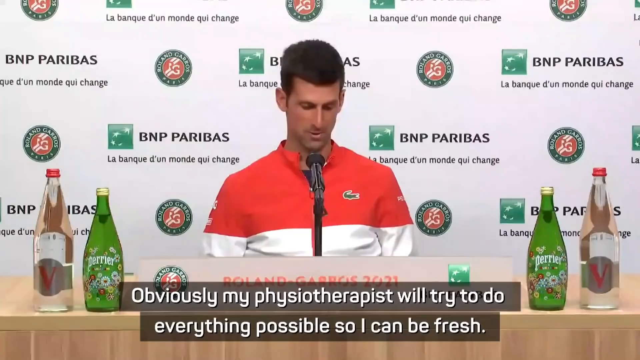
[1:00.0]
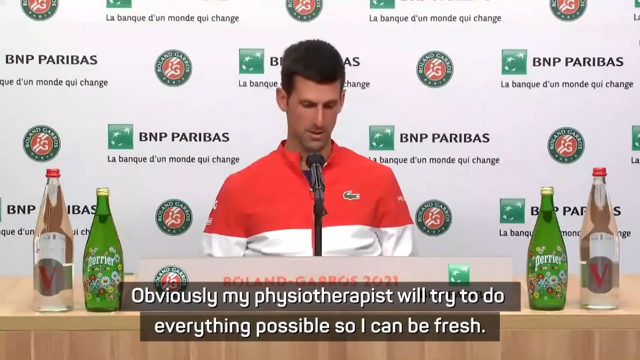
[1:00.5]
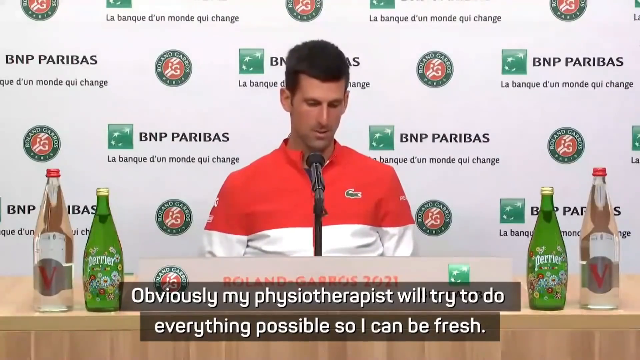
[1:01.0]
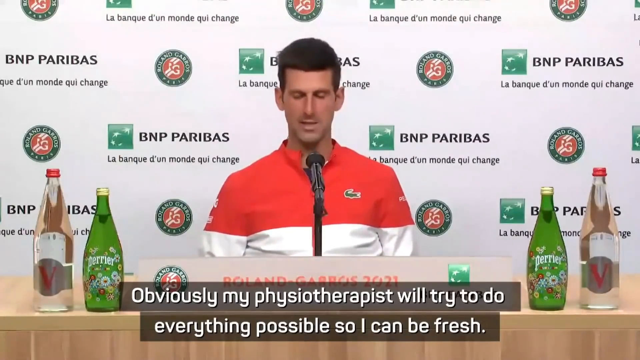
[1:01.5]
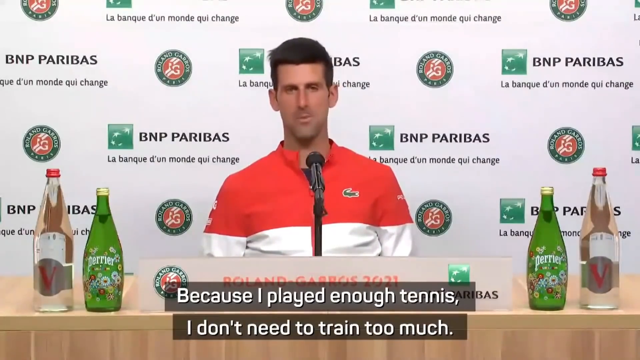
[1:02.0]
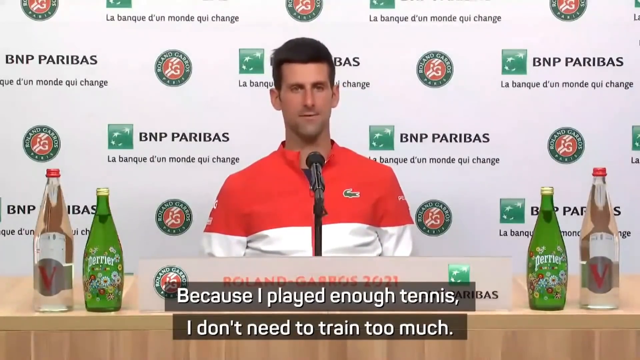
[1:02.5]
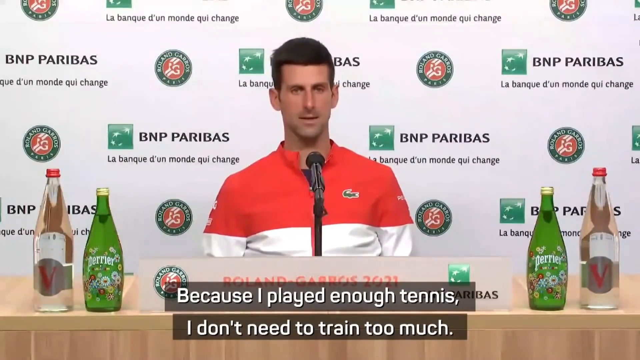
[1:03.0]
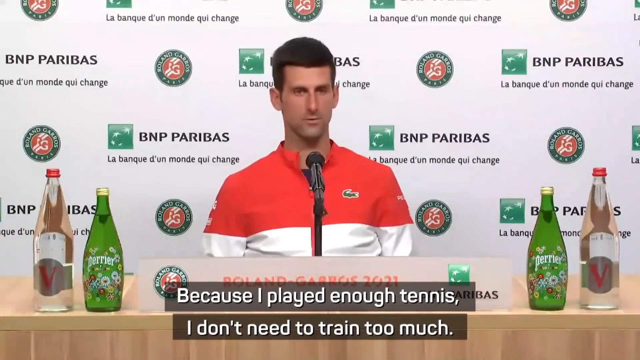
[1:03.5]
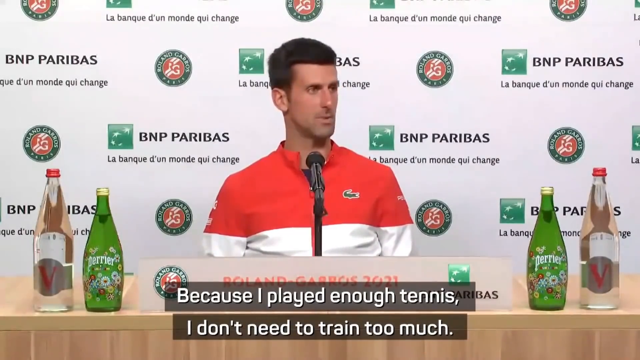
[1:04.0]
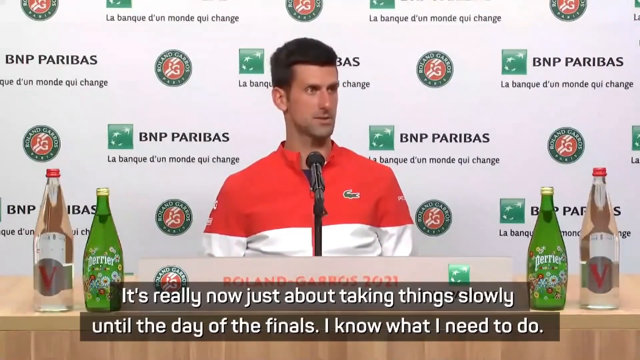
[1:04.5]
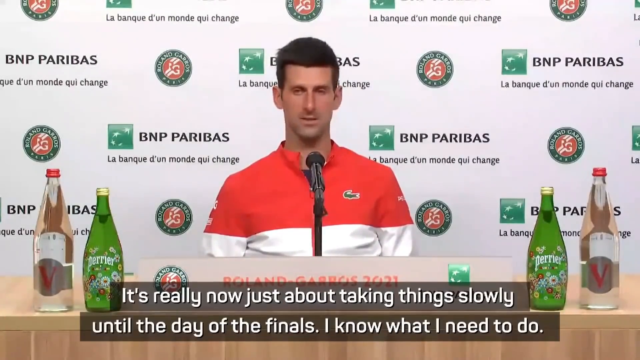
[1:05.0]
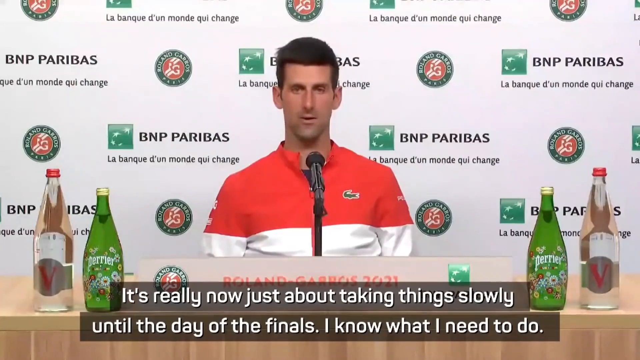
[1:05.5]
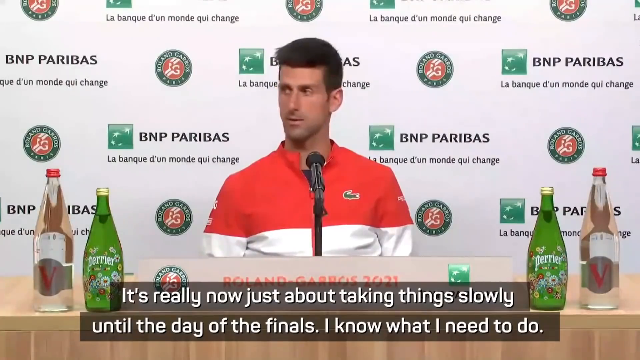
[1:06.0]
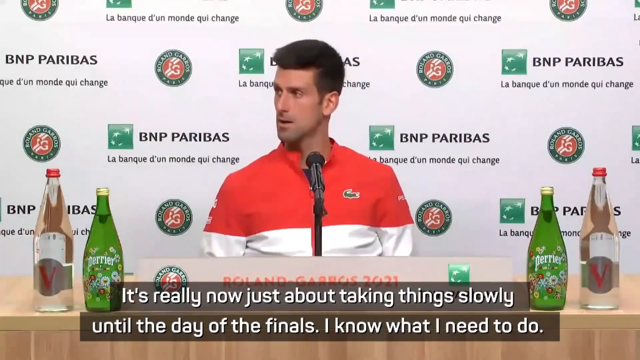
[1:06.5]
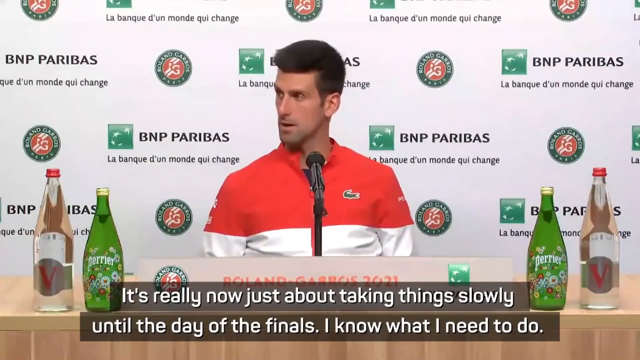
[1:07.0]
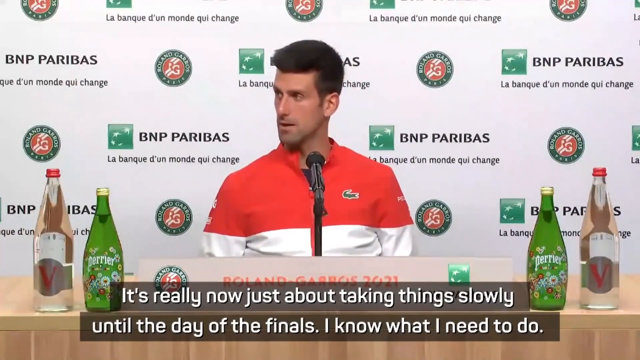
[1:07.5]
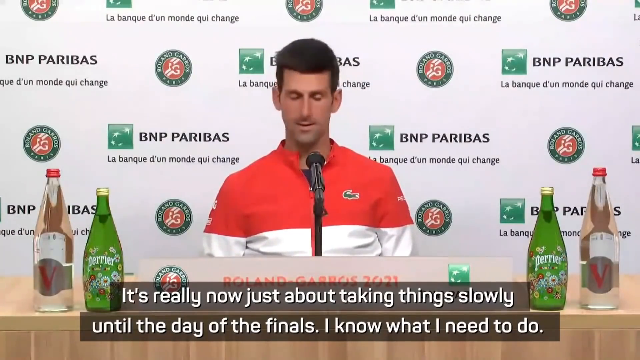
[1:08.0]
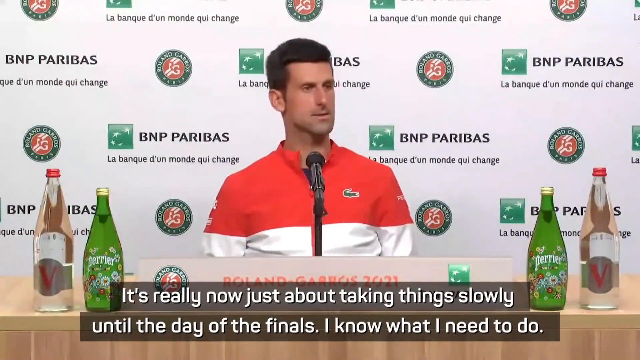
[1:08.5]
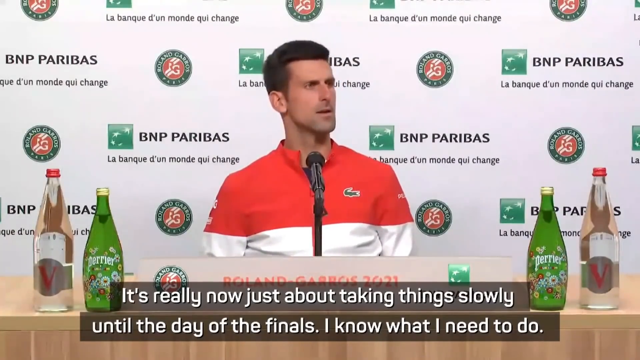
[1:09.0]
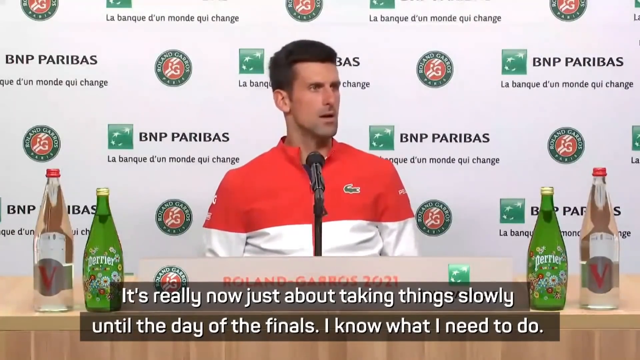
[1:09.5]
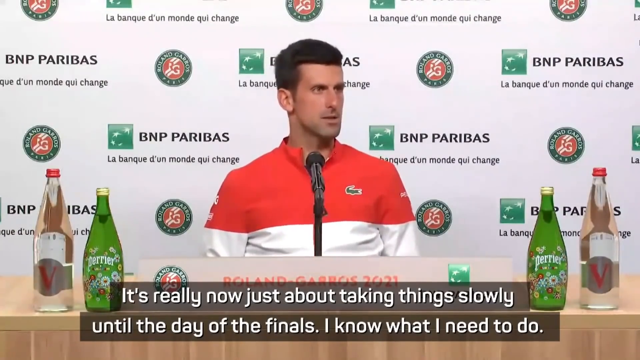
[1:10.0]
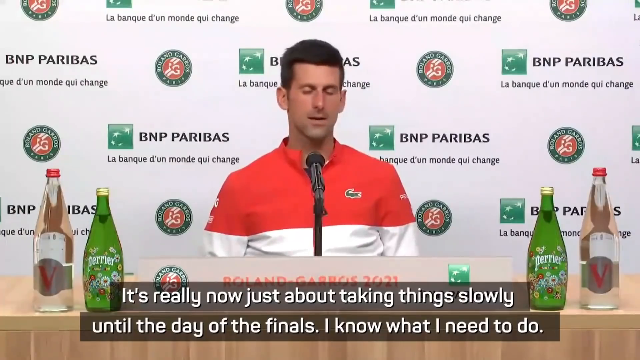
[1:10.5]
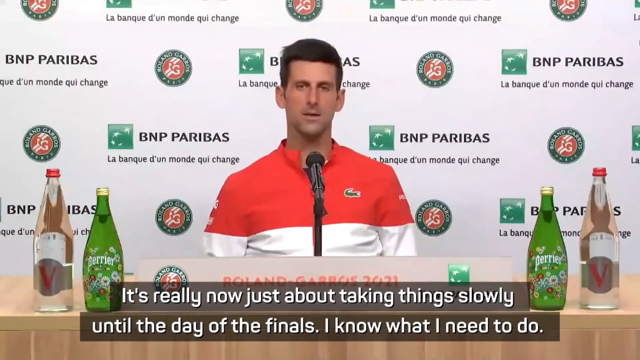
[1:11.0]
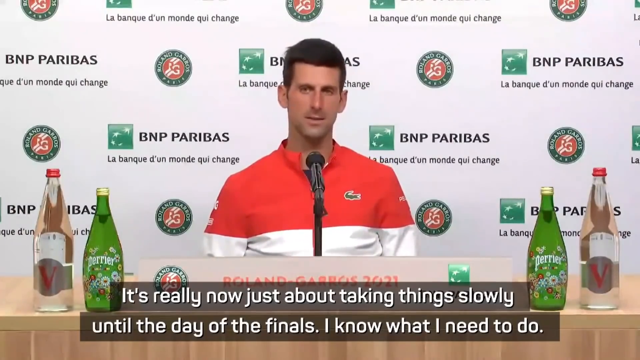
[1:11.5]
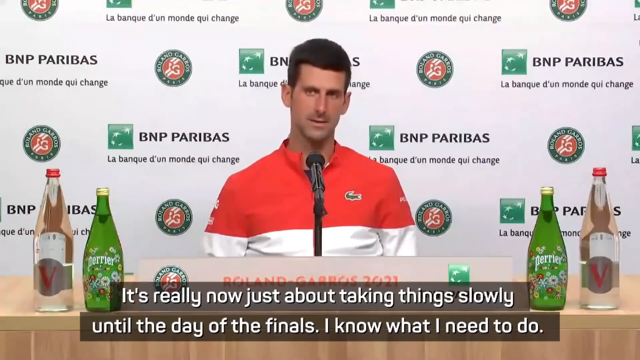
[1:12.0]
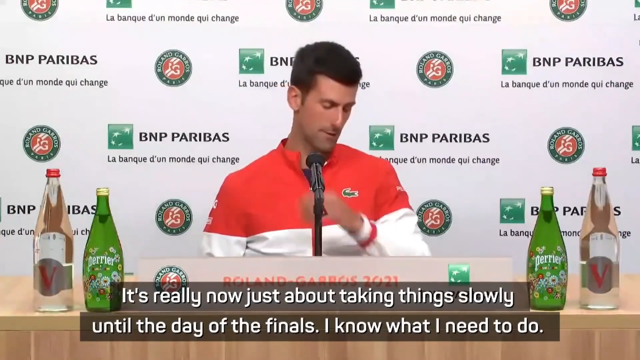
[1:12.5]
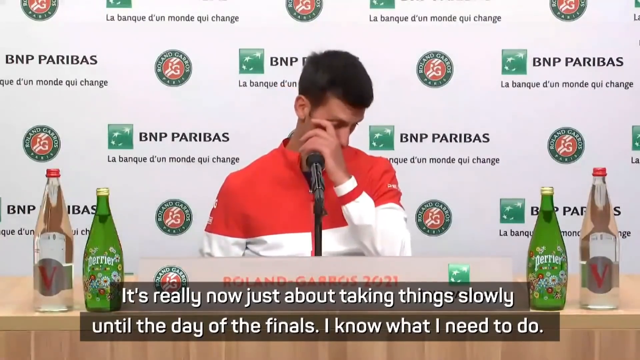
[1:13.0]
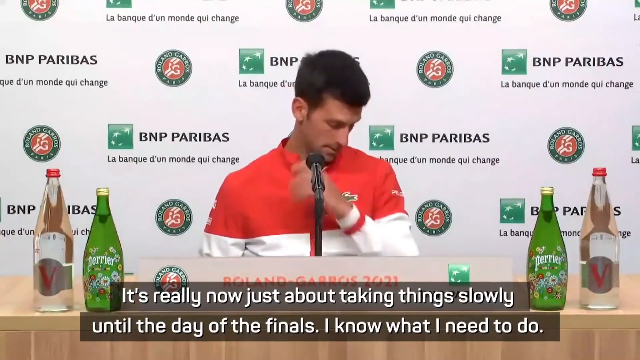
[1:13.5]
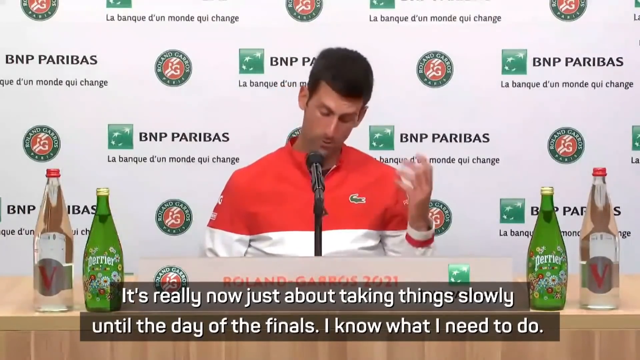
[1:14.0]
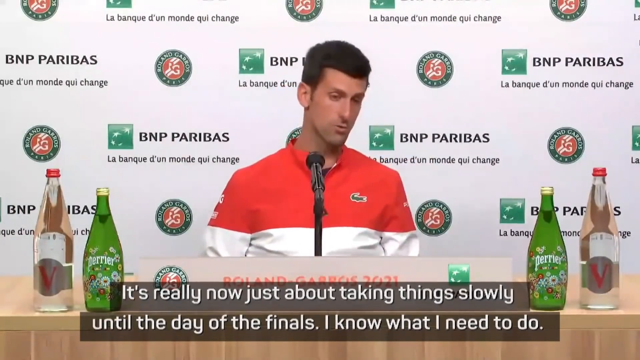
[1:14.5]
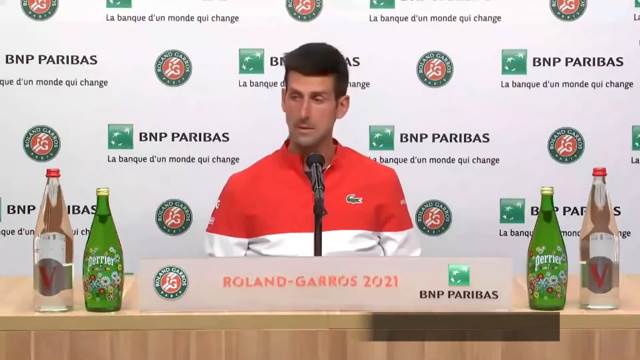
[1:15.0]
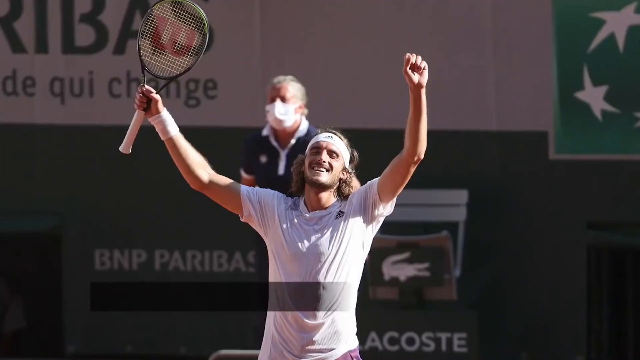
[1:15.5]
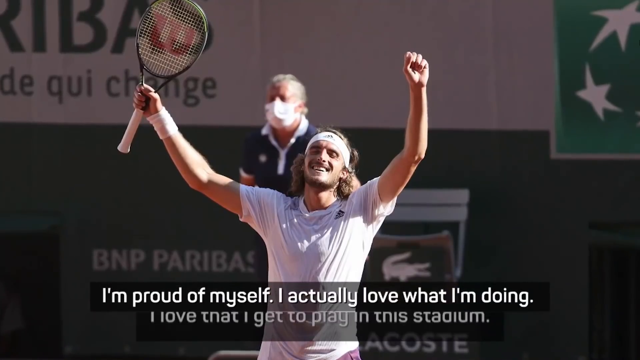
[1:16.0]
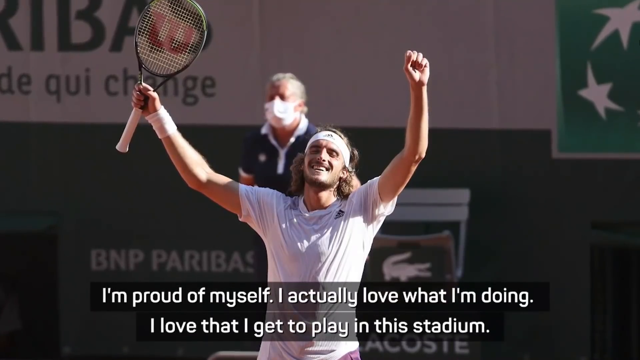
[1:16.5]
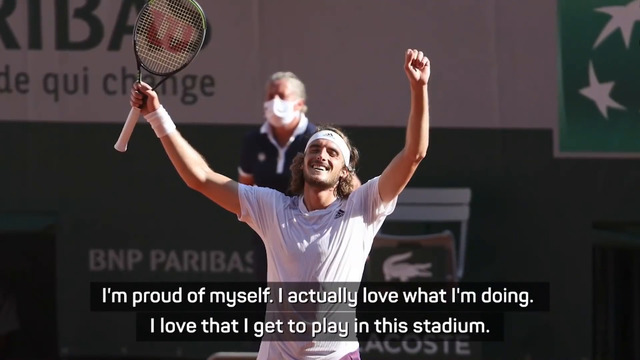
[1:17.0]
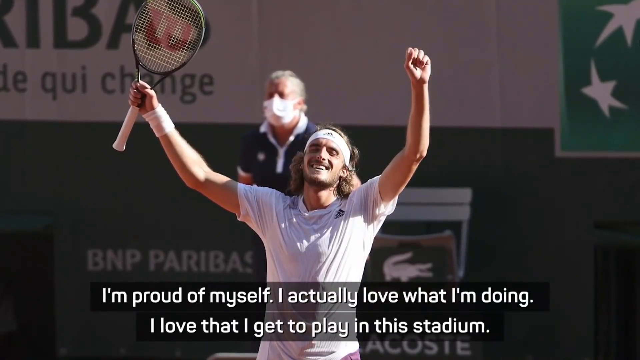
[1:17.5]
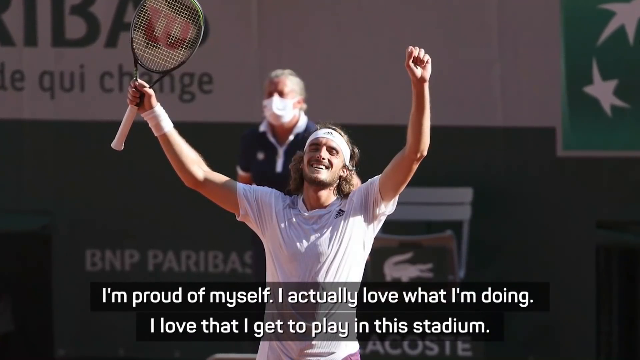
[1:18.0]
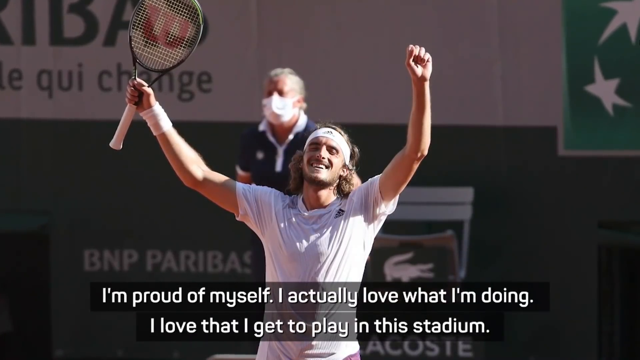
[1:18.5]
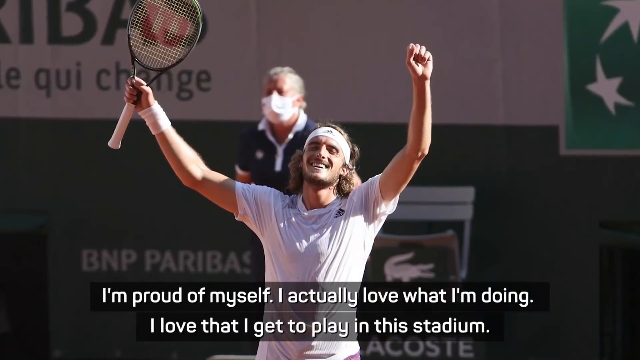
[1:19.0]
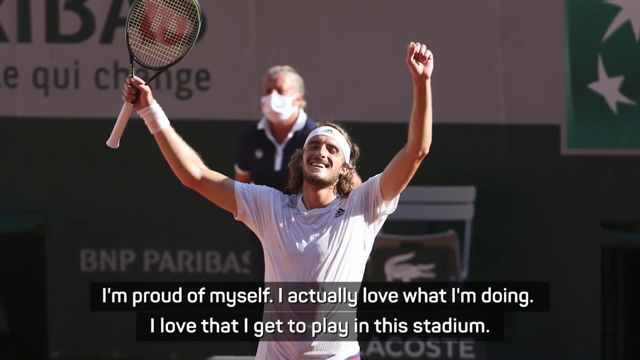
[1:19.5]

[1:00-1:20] The man in the red and white shirt sits at a wooden table speaking into the microphone. He looks to his right (the viewer's left), then toward the opposite direction, then toward about the center. His left arm comes up as he scratches around his right eyebrow area. Then a still image from the tennis match shows his opponent, the man with the longer hair, with both arms up in celebration. He wears a white headband and a white t-shirt, grips the tennis racket in his right arm, and there appears to be some sort of wristband on his right arm as well. Text at the bottom of the screen shows what the speaker is saying, and it appears from it that the man being interviewed lost the game but is still proud of himself.